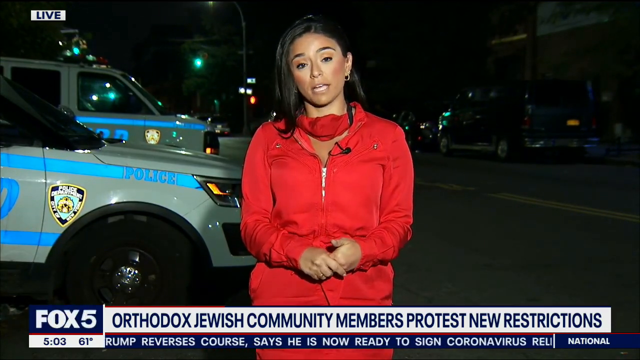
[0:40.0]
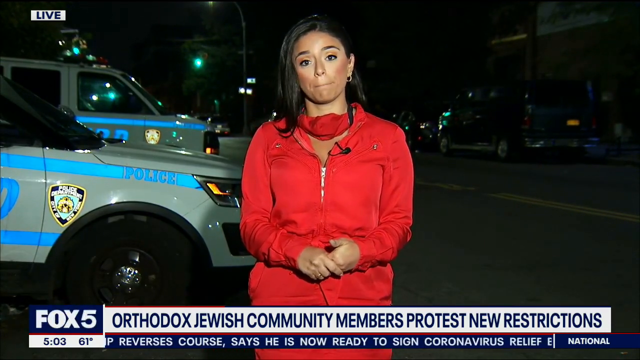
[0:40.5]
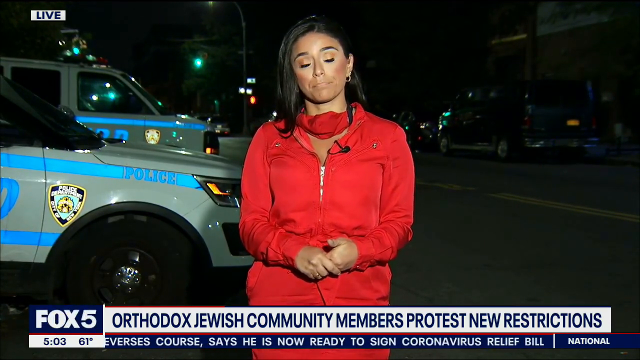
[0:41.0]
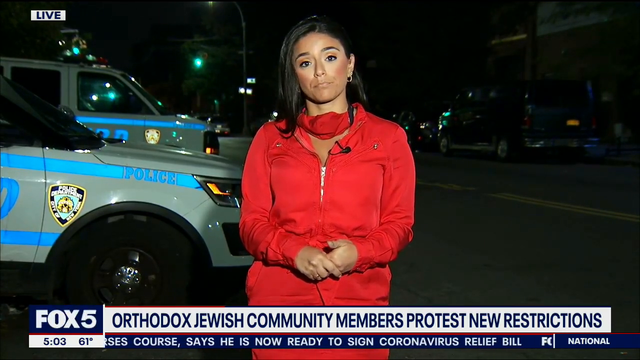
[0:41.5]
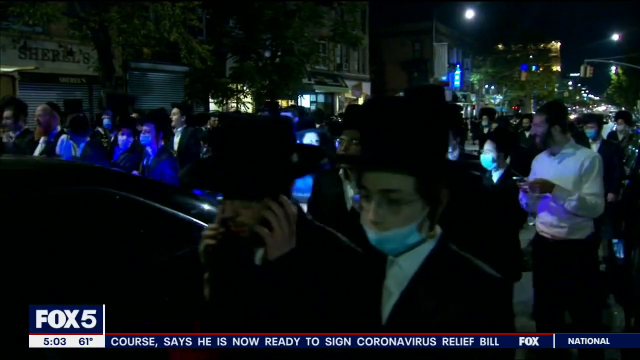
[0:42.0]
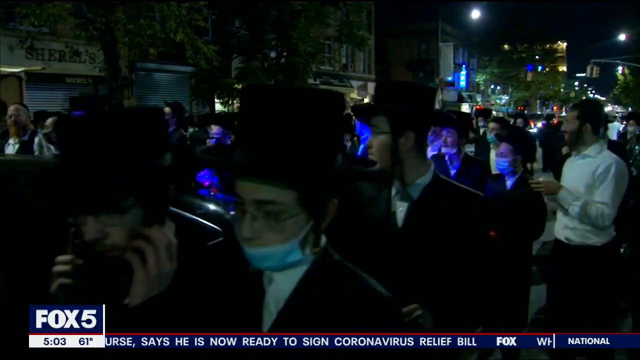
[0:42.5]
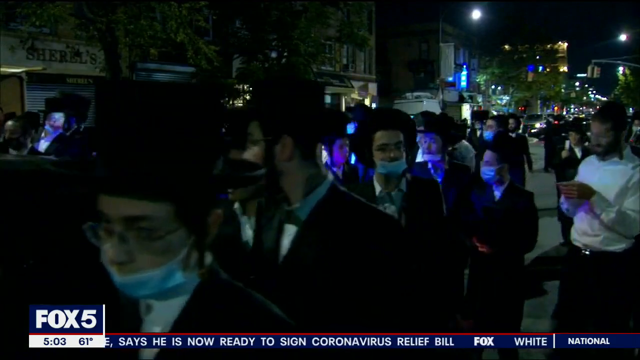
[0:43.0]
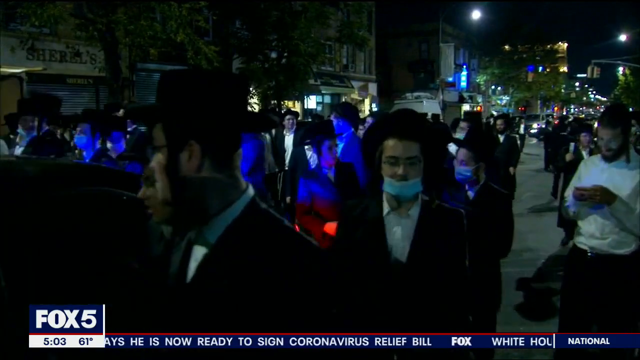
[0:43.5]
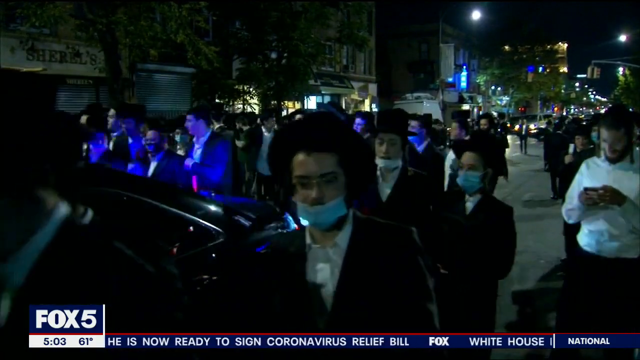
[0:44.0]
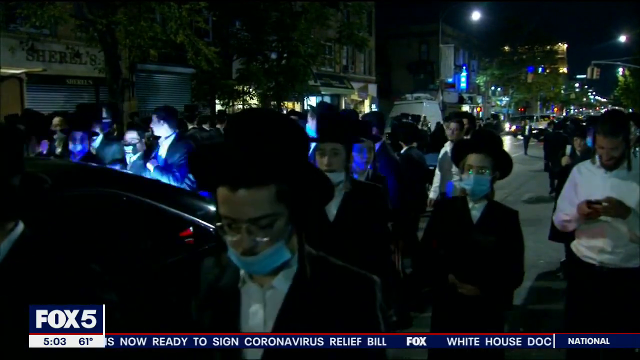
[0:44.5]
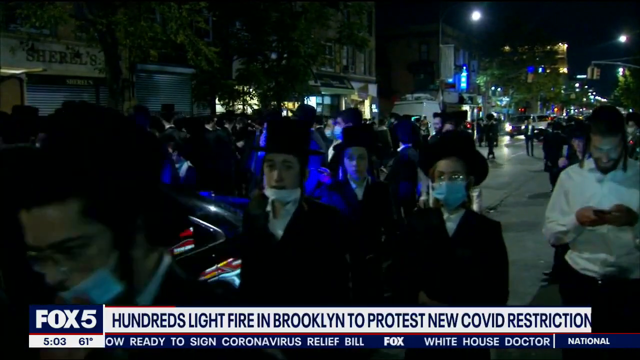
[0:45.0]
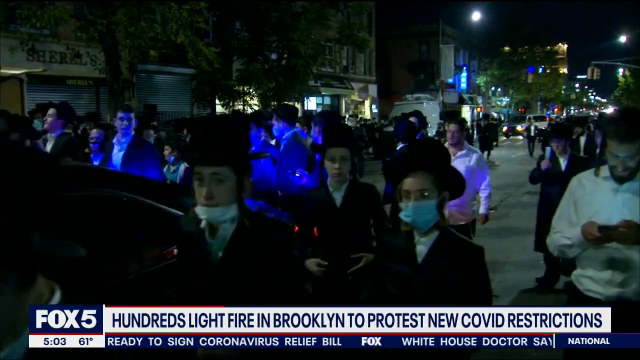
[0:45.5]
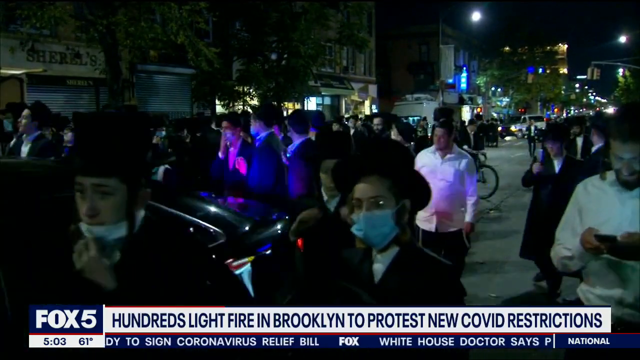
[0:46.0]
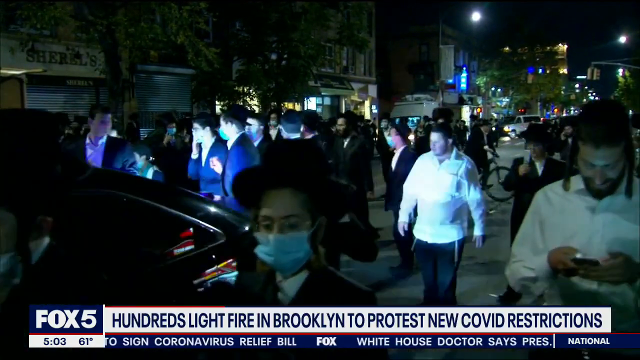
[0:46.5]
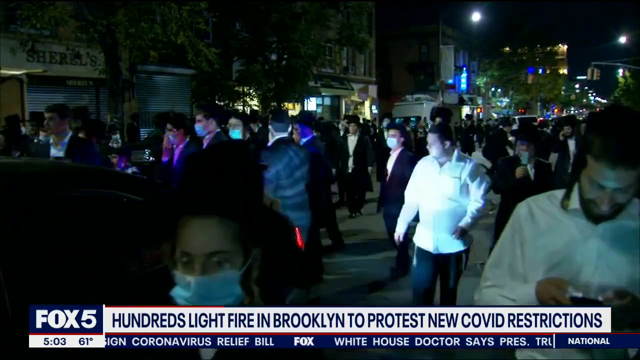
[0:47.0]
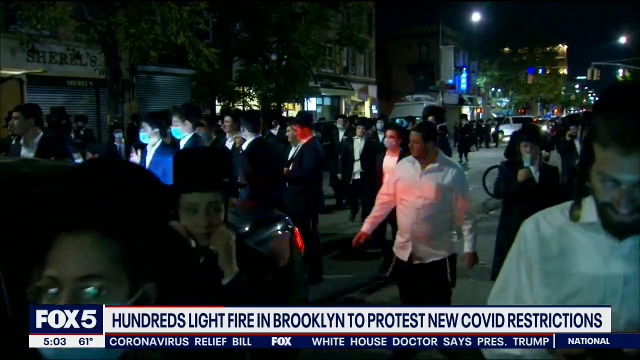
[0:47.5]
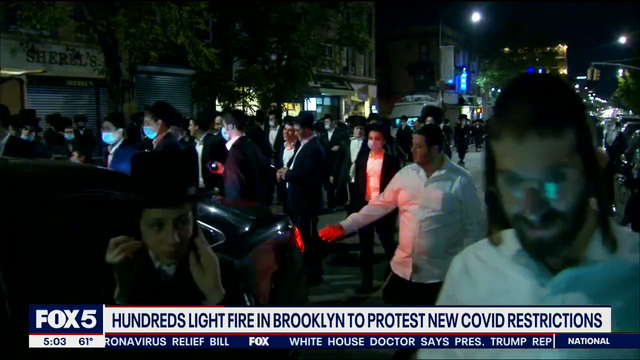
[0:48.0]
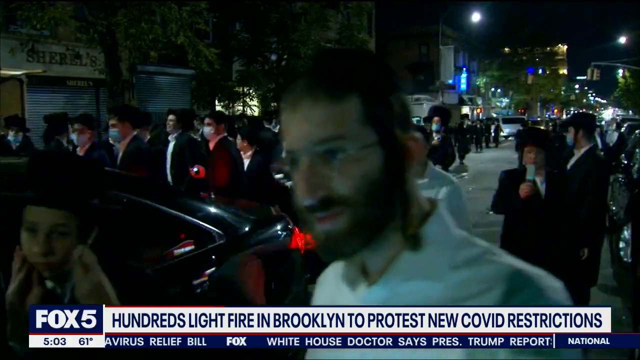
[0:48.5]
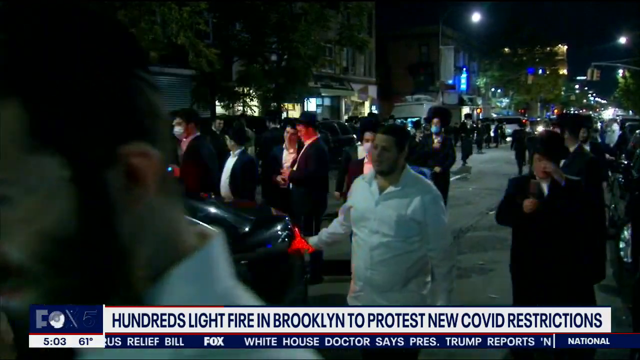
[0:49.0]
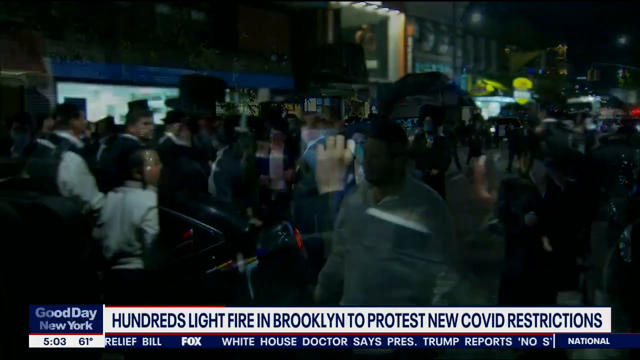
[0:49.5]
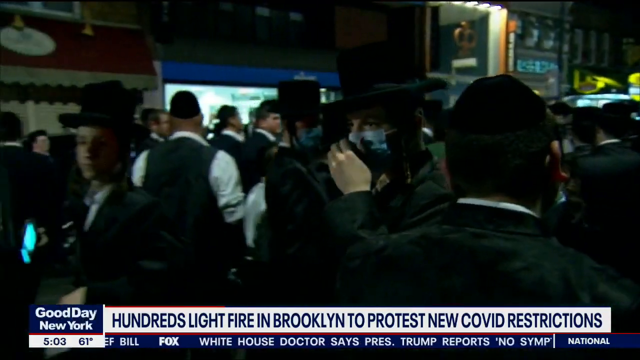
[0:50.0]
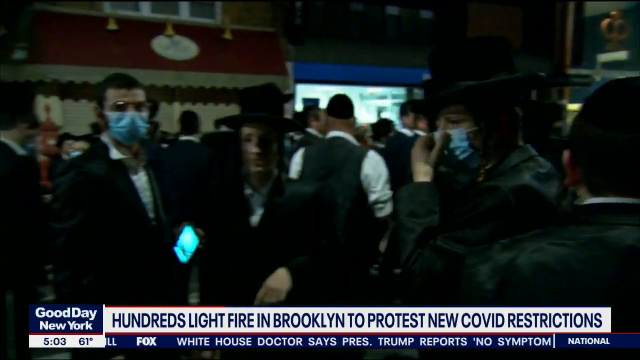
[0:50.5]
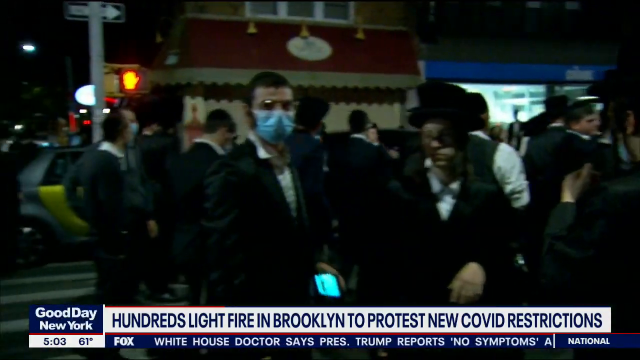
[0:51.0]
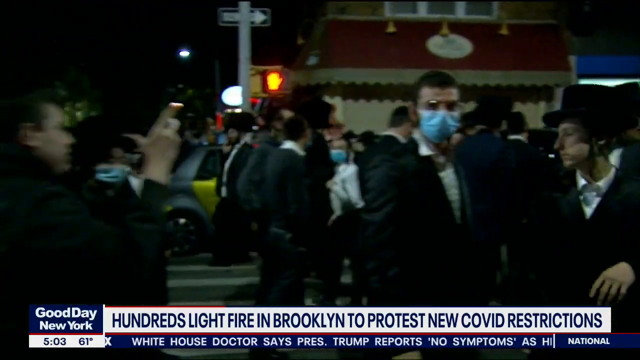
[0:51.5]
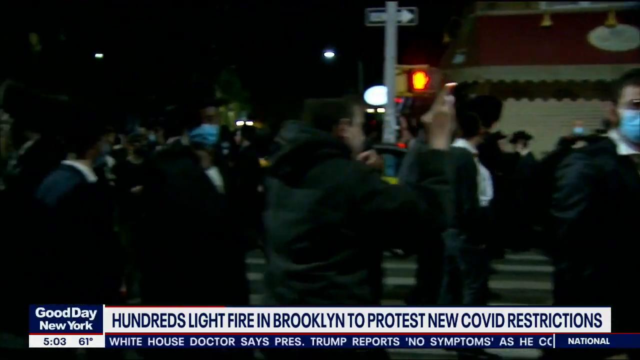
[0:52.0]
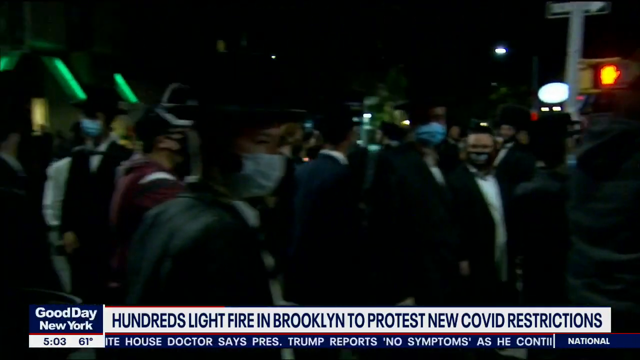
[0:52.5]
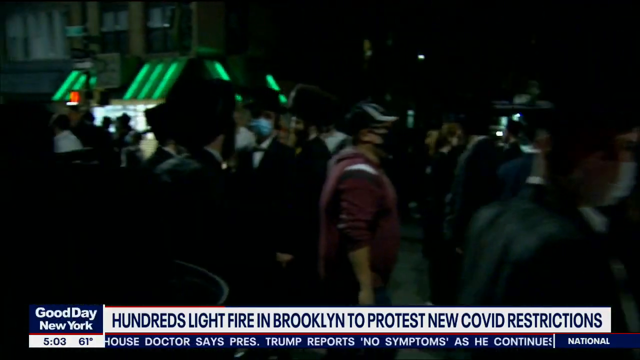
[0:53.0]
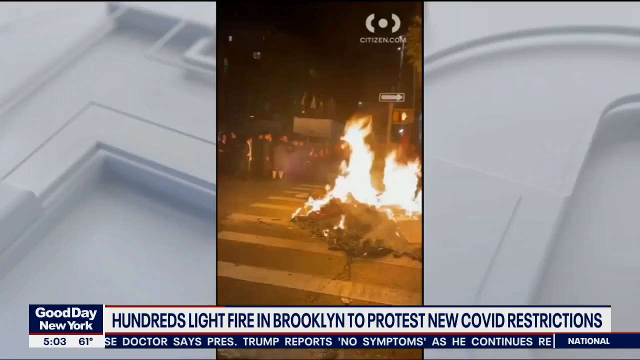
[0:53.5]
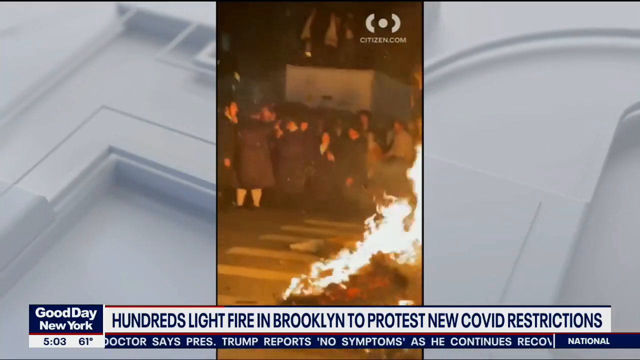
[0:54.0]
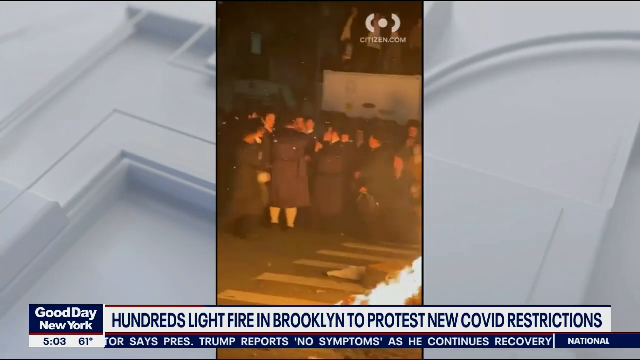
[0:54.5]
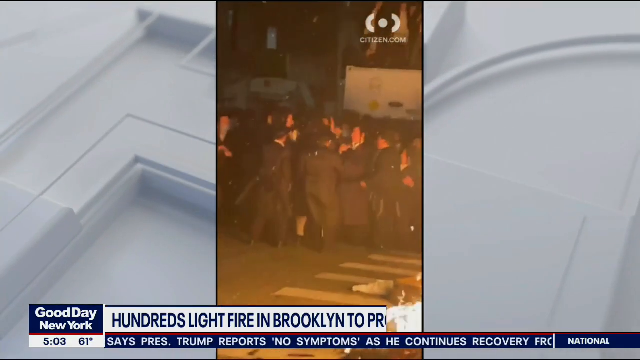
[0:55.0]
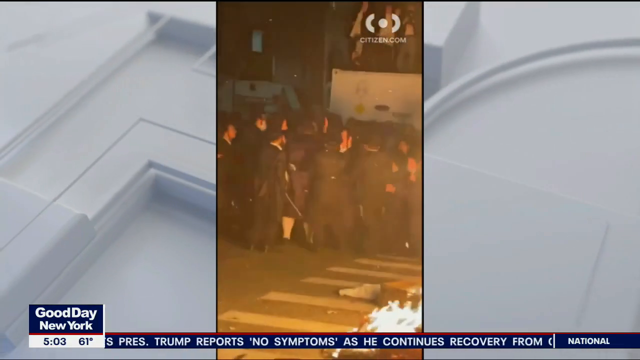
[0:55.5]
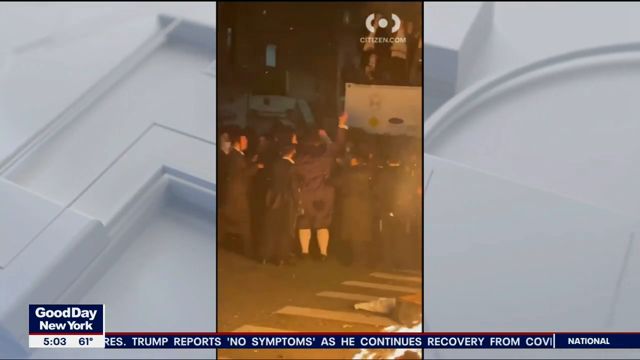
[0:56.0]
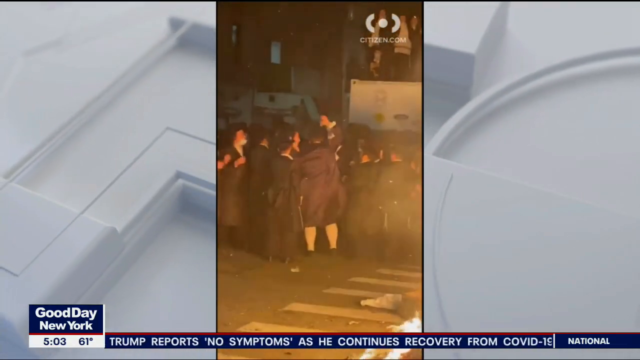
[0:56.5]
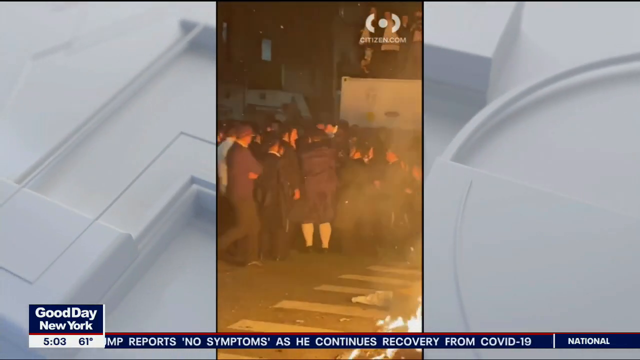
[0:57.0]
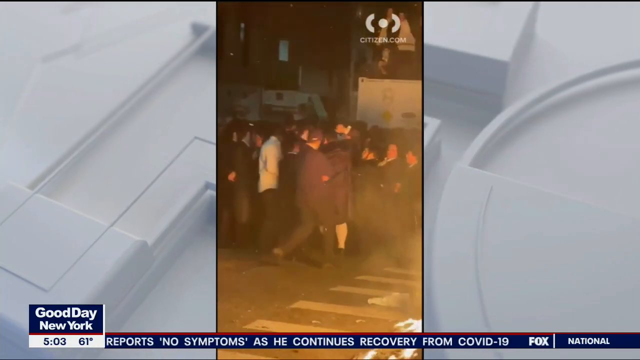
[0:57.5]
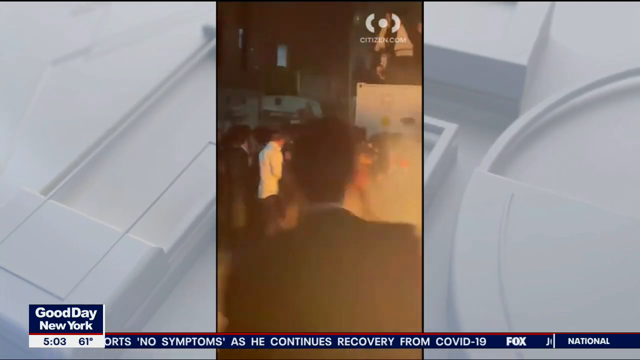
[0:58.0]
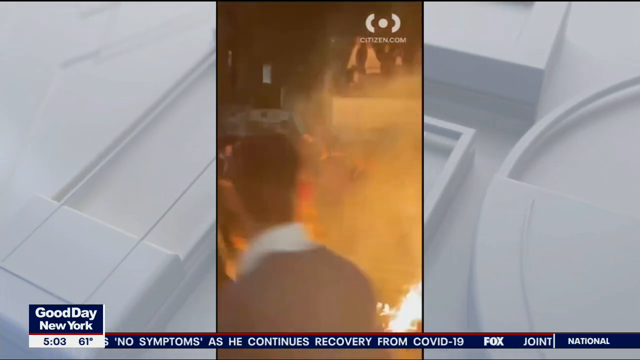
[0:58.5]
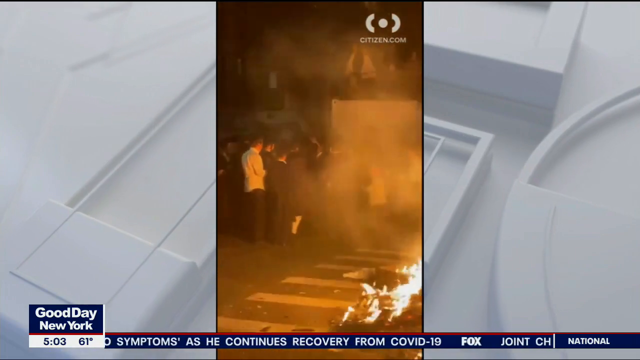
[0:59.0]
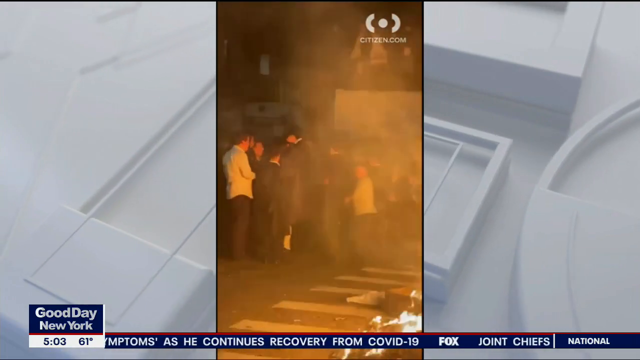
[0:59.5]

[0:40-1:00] The woman looks at the camera and speaks, then stops speaking and clasps her hands together. The image changes to a recording of a street at night, where hordes of Hasidic men walk past; the majority wear blue medical face masks, while some do not. A white box appears at the bottom with the words "hundreds light fire in Brooklyn to protest new COVID restrictions" in blue text. Hordes of men stand on the street. The video returns to the fire footage seen earlier, shown vertically in the centre of the screen. The camera zooms in to show a crowded group of Hasidic men facing away from the fire, who appear to be yelling at something or someone standing at an elevated point. Only men appear in these videos, dressed in typical Hasidic fashion: black suits, black brimmed hats, and plaits of hair down the sides of their faces.